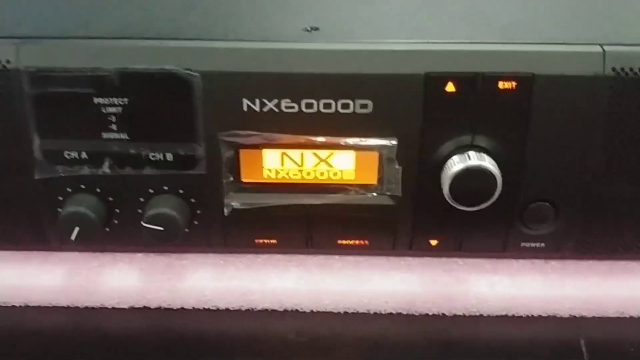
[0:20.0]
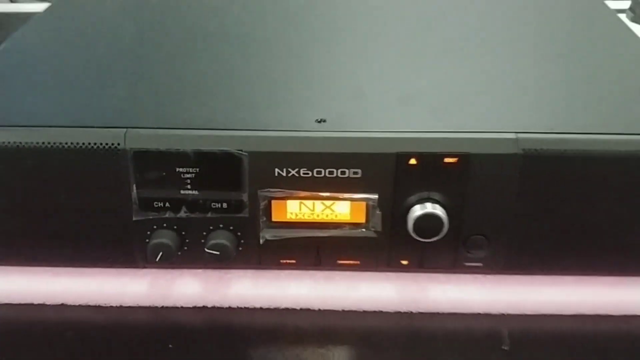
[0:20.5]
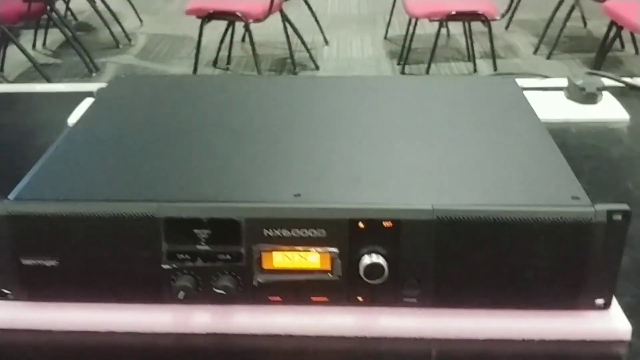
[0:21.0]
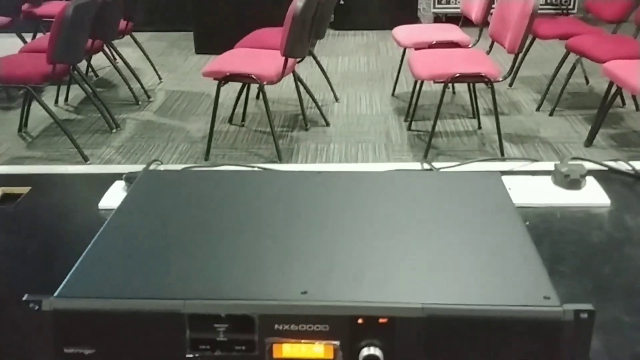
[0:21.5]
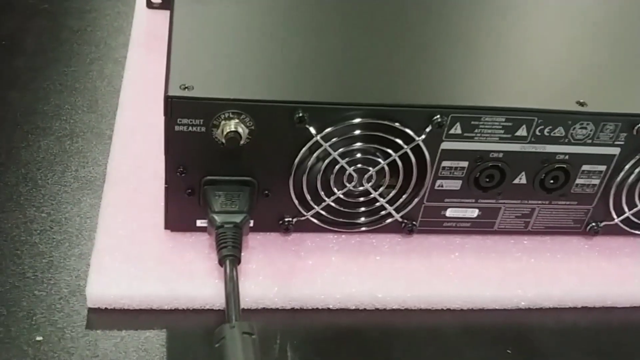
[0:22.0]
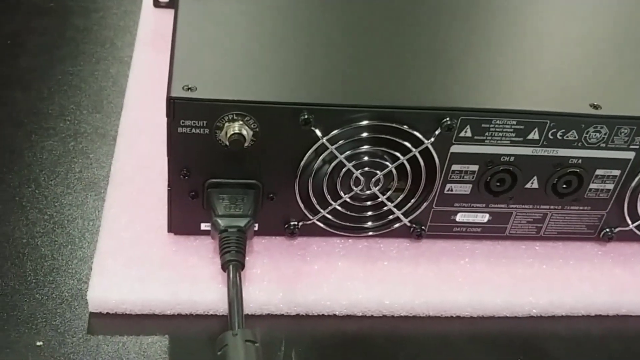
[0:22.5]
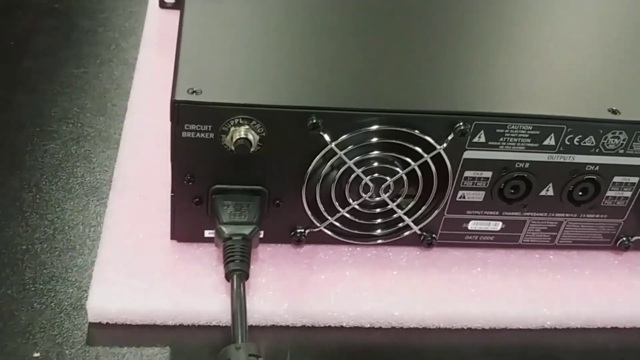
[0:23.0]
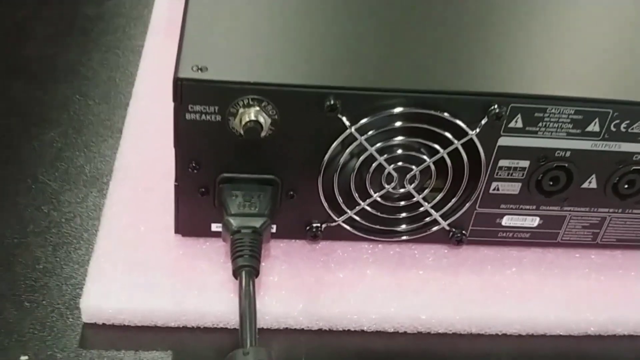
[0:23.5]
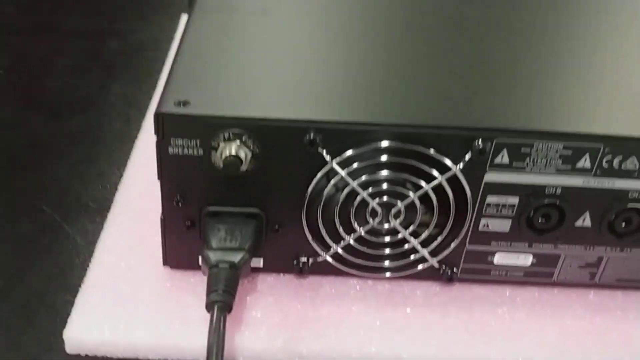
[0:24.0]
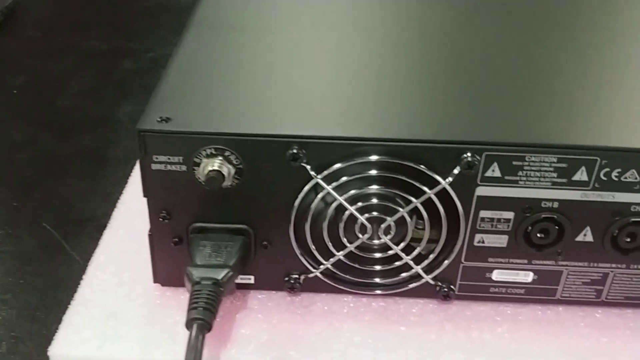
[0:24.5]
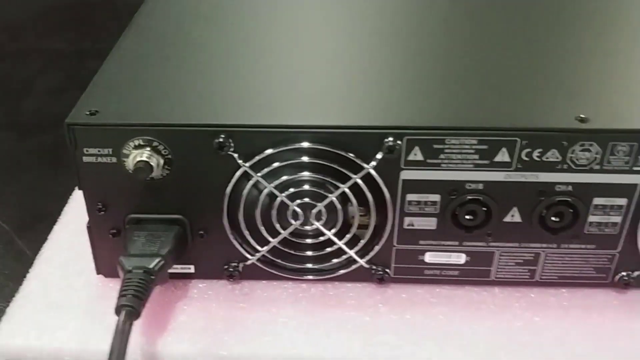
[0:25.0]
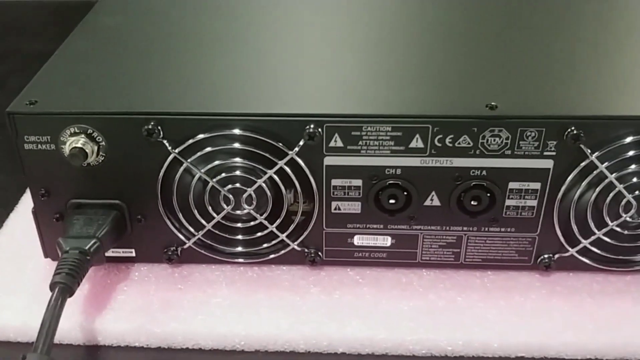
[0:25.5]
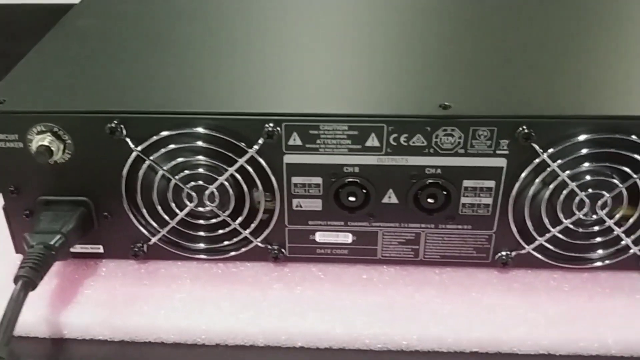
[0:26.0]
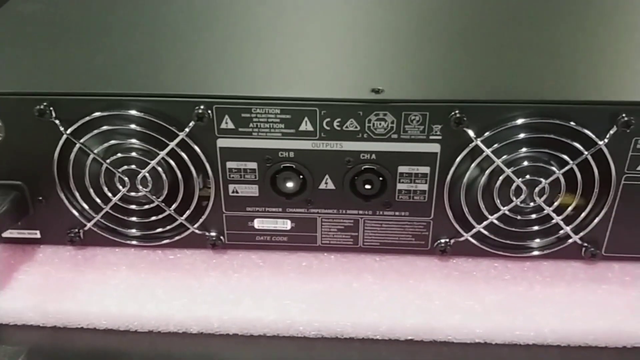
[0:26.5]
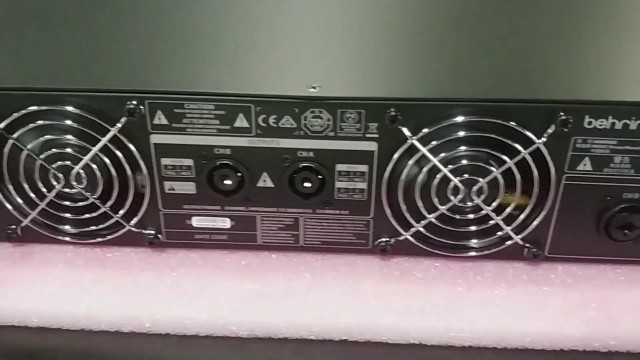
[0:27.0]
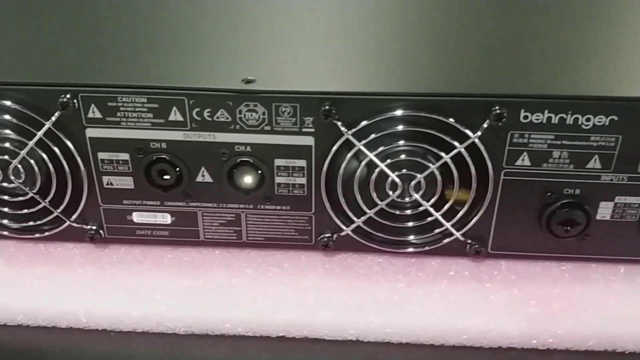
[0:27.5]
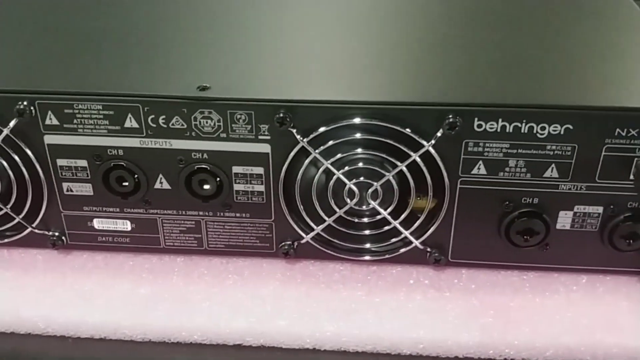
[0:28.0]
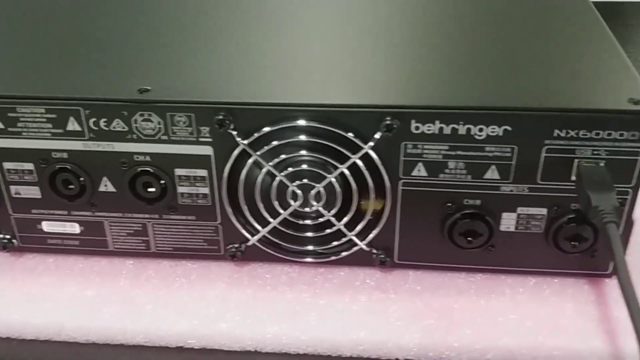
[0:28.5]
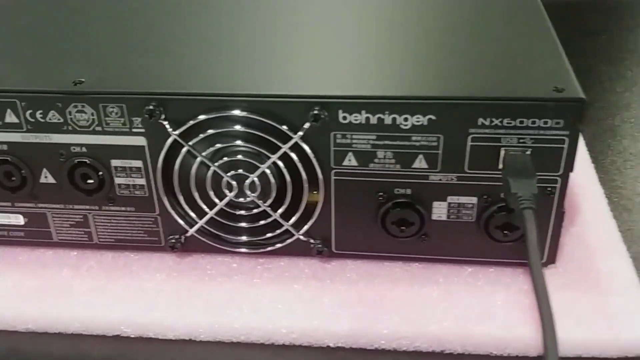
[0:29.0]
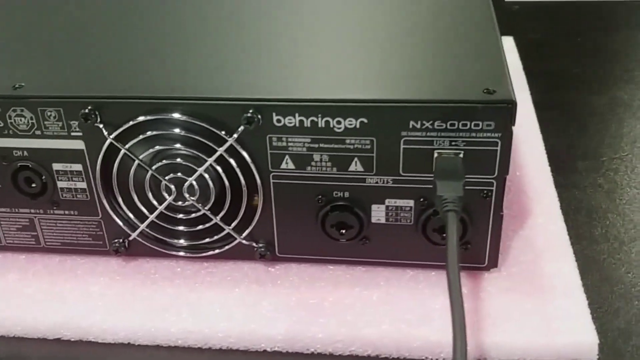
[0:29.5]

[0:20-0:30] The front of the audio-visual equipment is shown again, still illuminated. The camera pans out to show several pinkish-reddish chairs set up in rows, similar to a classroom or instructional setting. The view then changes to the back of the equipment, where a power cord is plugged in. There are two metal circles, apparently protecting the fan, and between them are two what look like ports or jacks. There is lots of white writing on a black background. To the left of the second fan are two more ports and another cord plugged in.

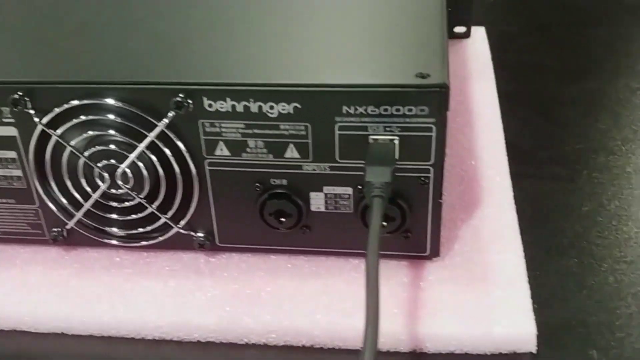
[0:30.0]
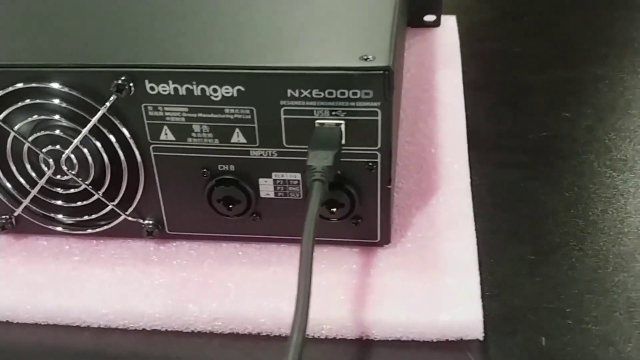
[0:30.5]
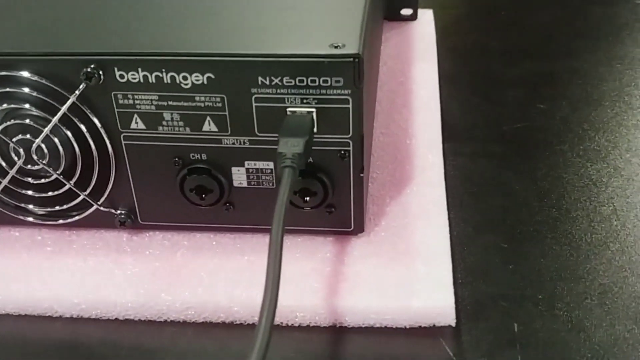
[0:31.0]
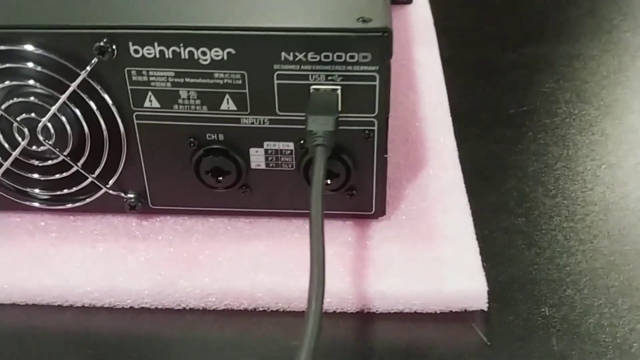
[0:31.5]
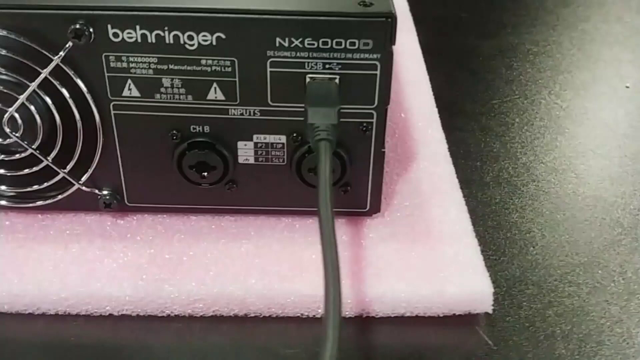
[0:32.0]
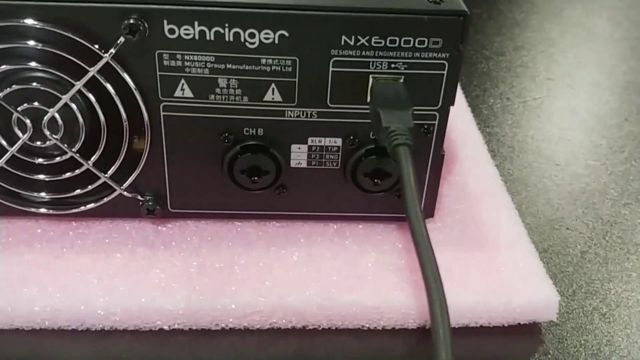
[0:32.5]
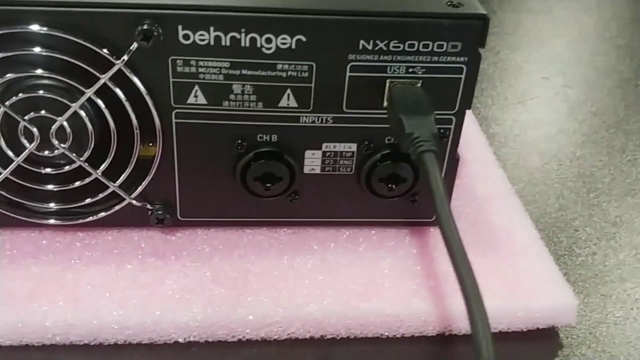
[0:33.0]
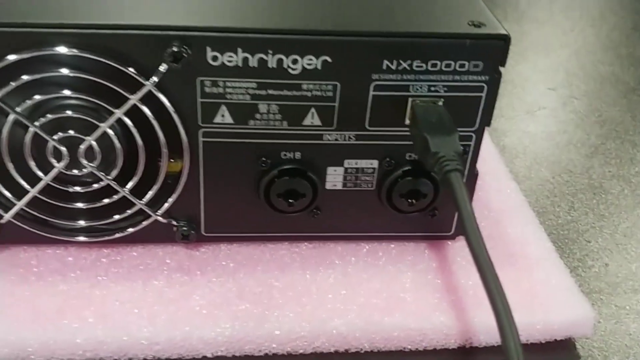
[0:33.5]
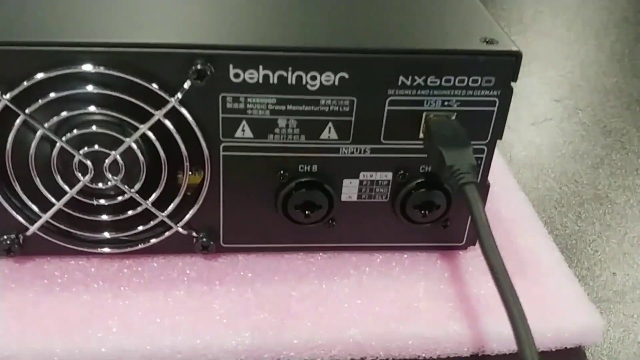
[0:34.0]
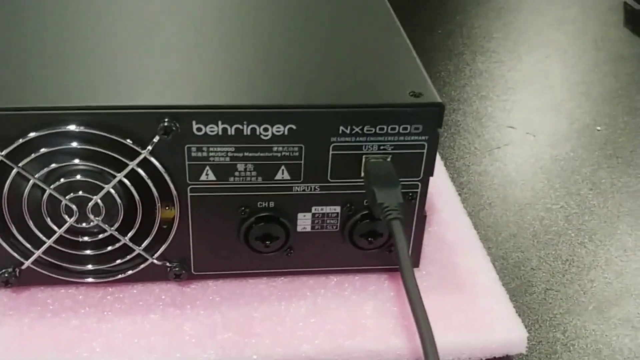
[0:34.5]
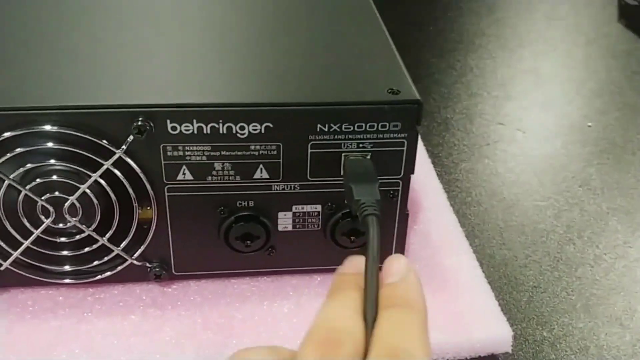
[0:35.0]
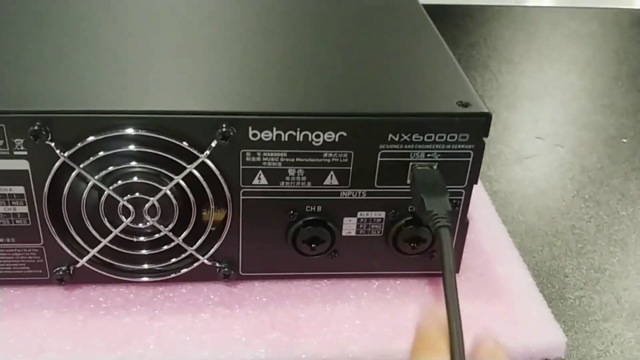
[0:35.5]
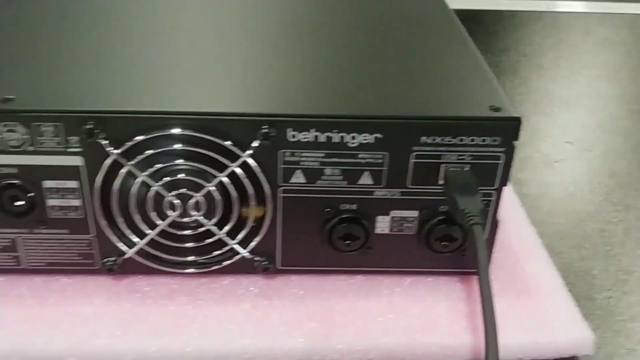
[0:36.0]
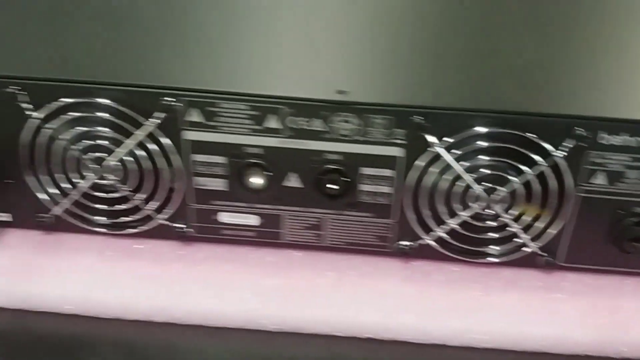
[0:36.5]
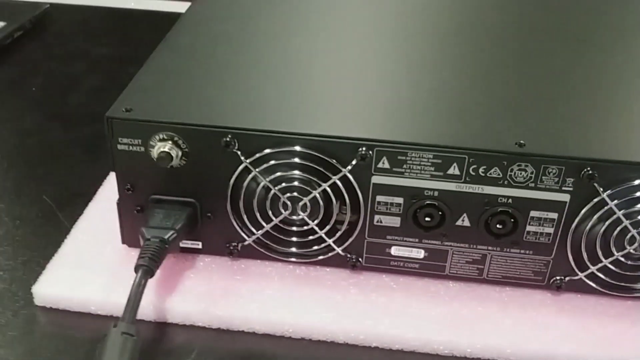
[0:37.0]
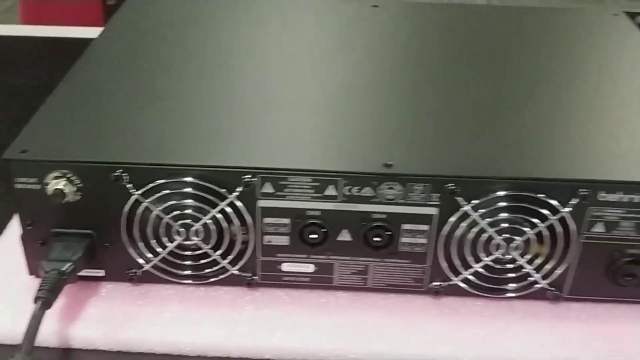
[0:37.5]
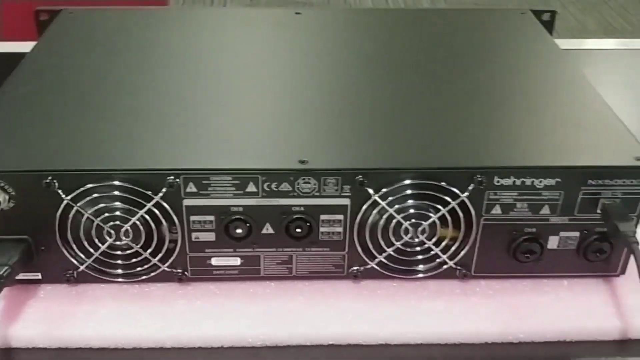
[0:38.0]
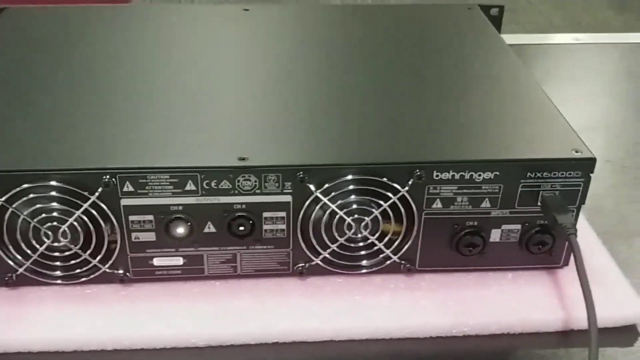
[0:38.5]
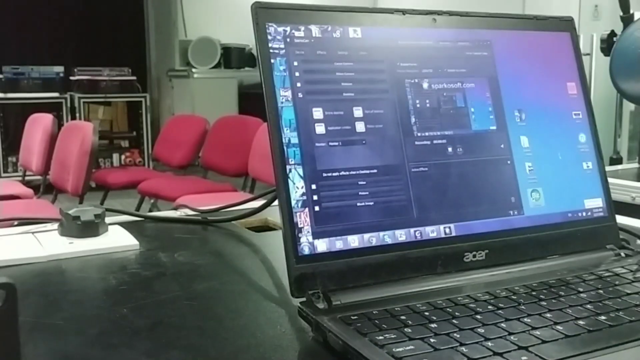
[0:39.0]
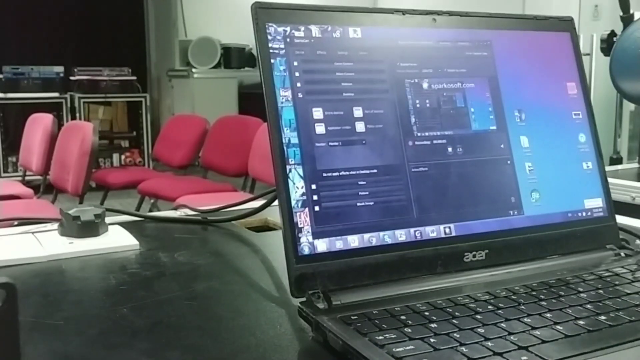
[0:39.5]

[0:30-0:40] The view focuses on the far right of the equipment, where there are two ports without plugs in them toward the bottom. Above them, a cord is plugged into the equipment. The name "Behringer" is clearly visible, presumably the brand, and "NX6000D" is visible again just above where the cord is plugged in, presumably the model. At one point a hand reaches for the cord. The camera then pans left to show the rest of the equipment, and then the view changes to a laptop screen, with the pinkish-reddish chairs set up in an instructional setting.